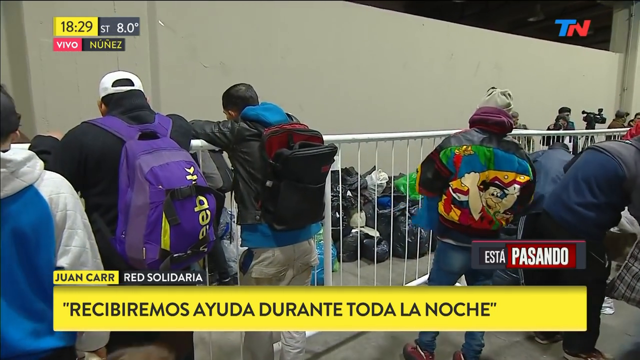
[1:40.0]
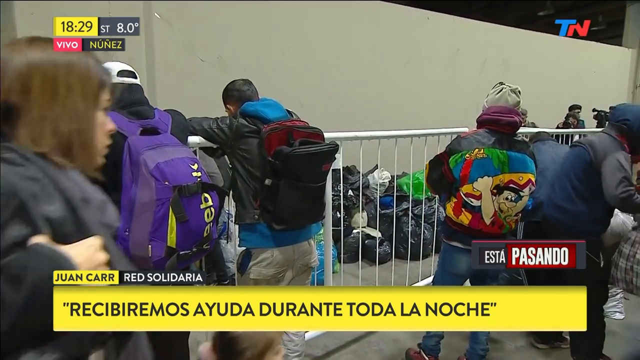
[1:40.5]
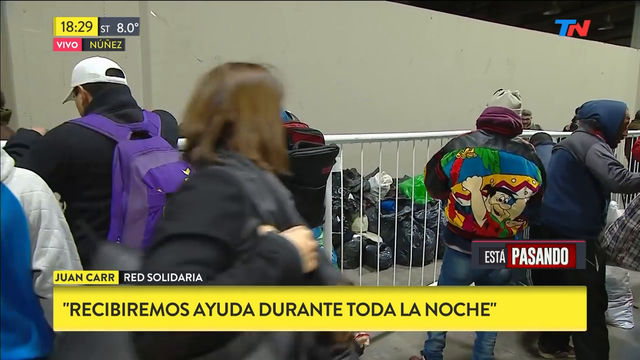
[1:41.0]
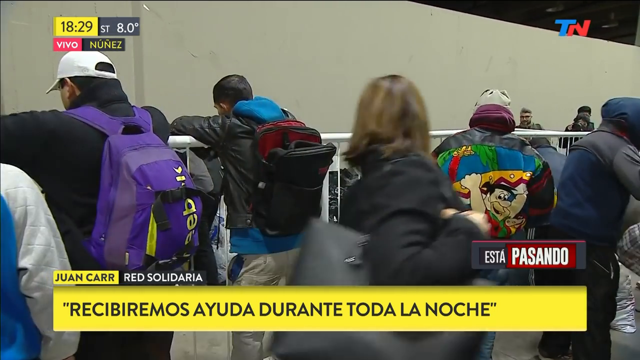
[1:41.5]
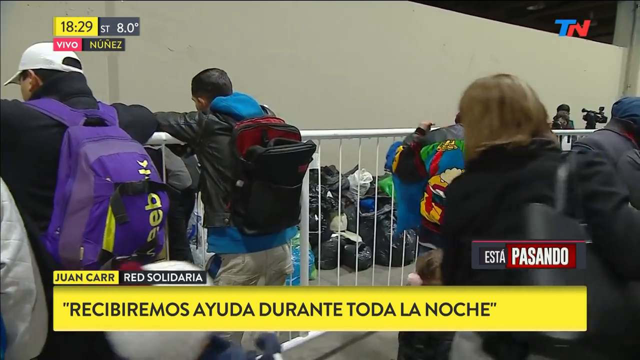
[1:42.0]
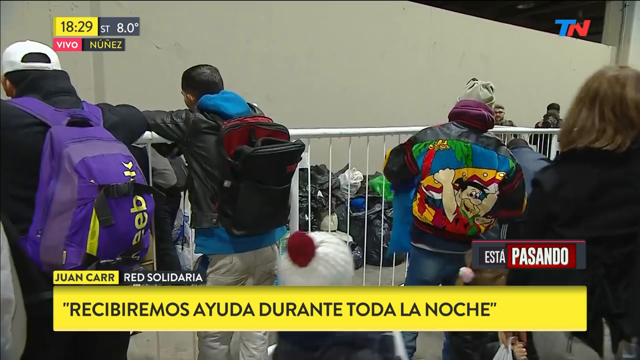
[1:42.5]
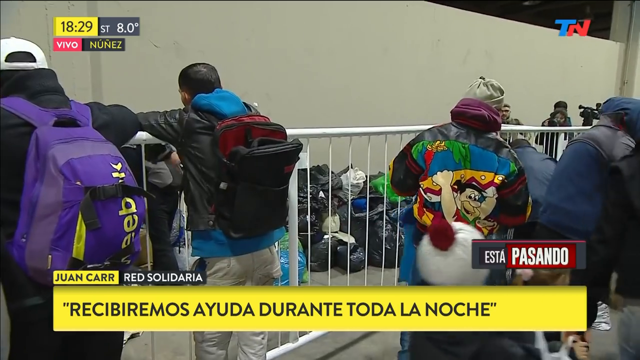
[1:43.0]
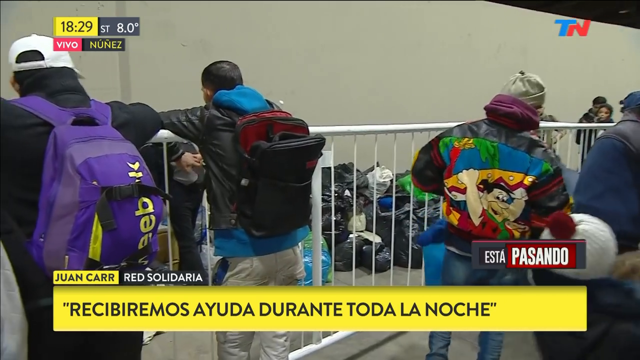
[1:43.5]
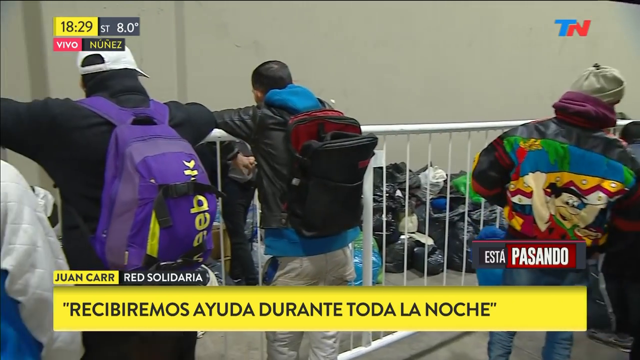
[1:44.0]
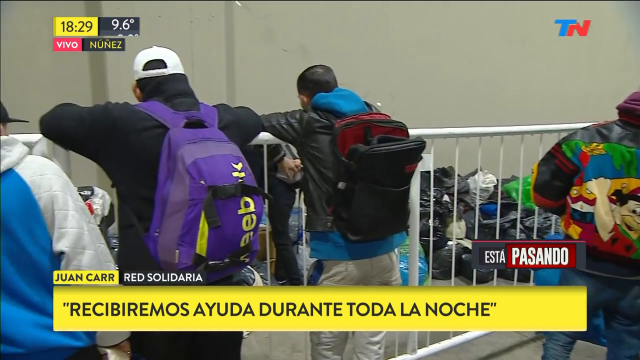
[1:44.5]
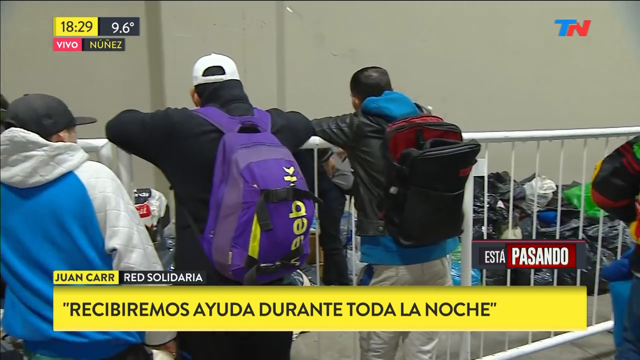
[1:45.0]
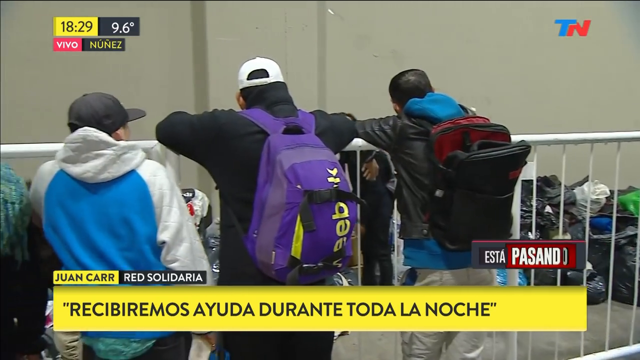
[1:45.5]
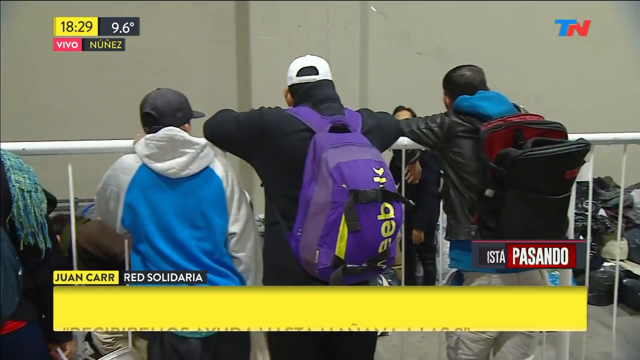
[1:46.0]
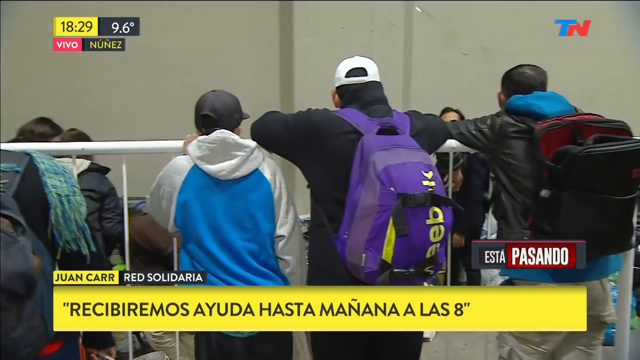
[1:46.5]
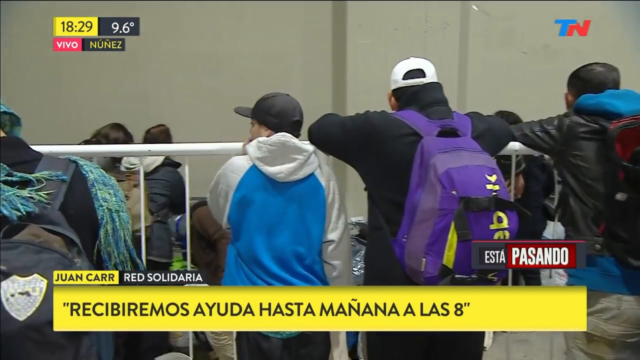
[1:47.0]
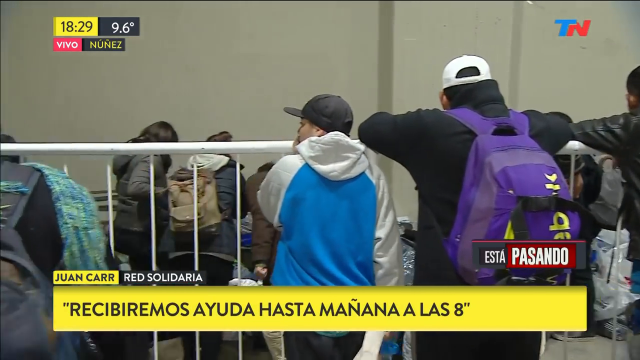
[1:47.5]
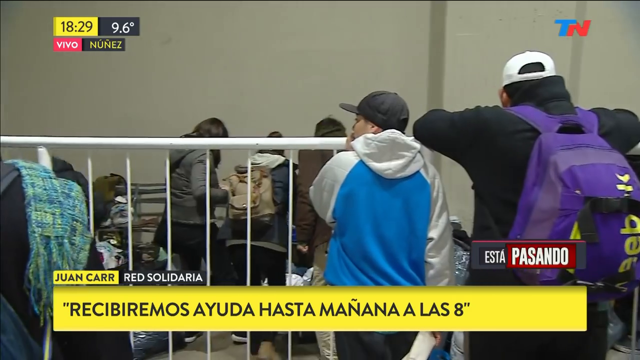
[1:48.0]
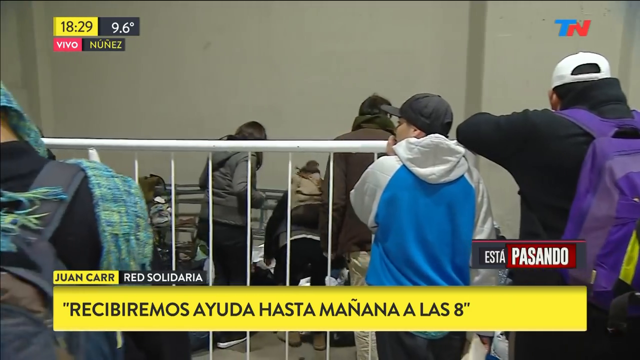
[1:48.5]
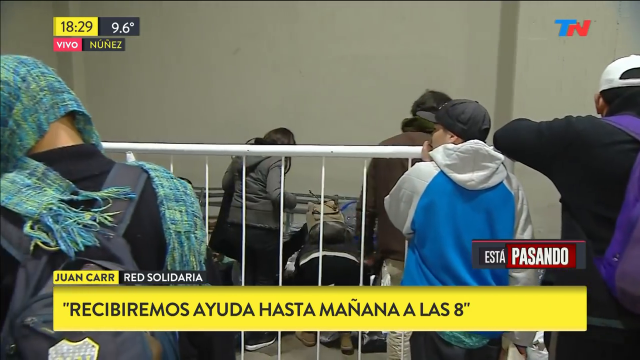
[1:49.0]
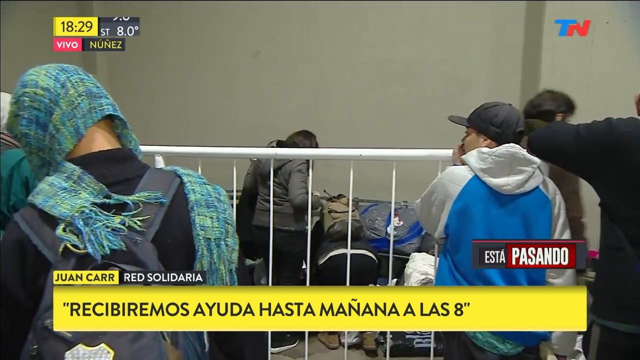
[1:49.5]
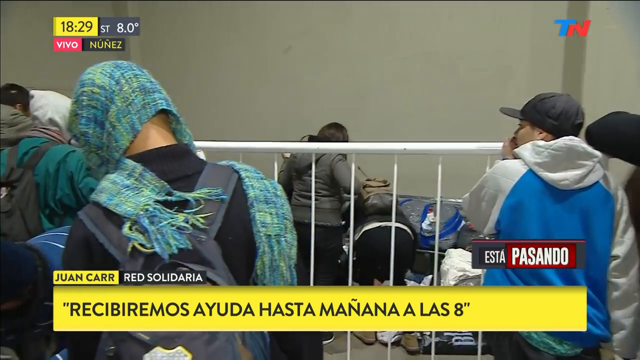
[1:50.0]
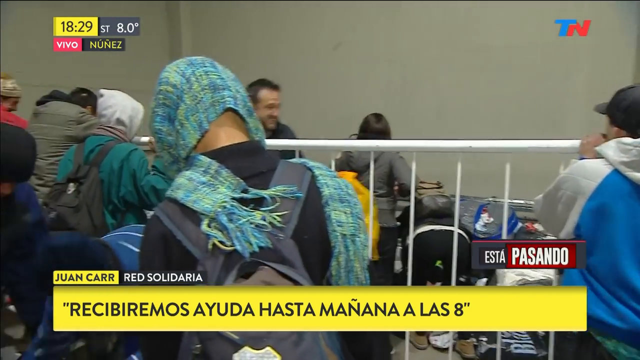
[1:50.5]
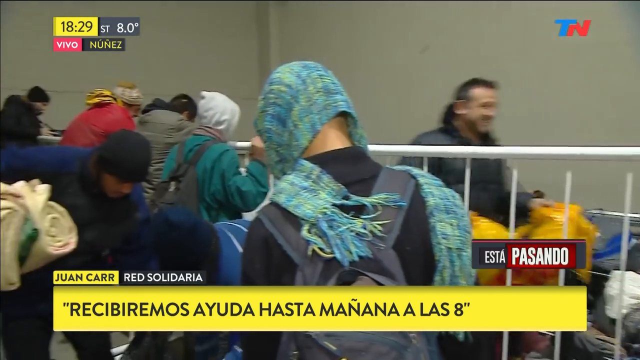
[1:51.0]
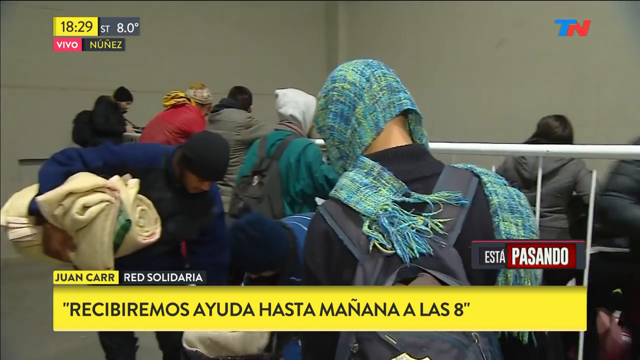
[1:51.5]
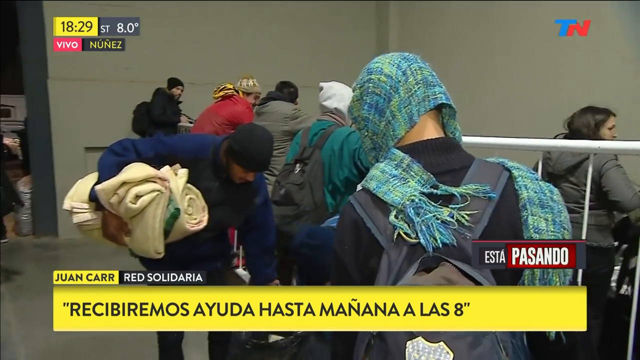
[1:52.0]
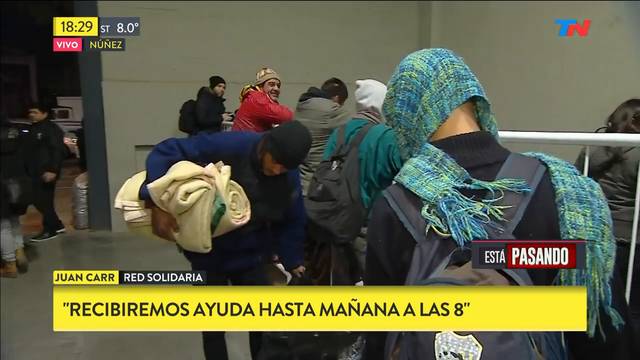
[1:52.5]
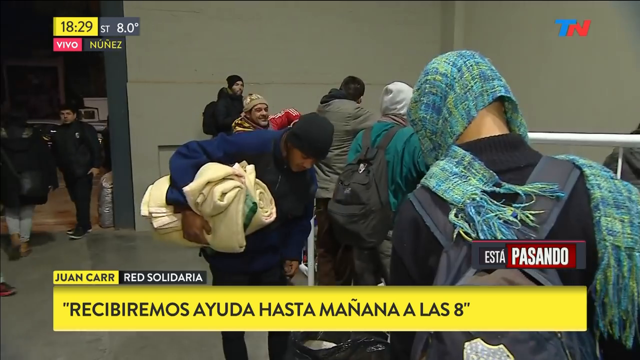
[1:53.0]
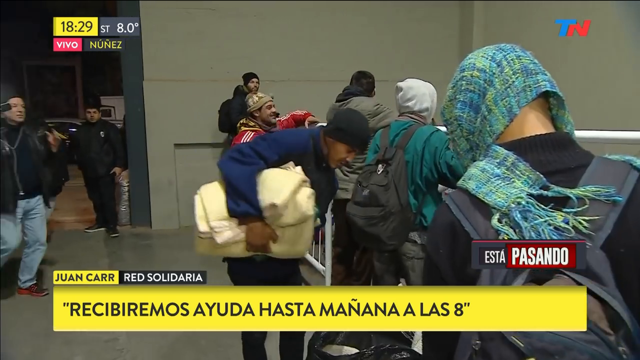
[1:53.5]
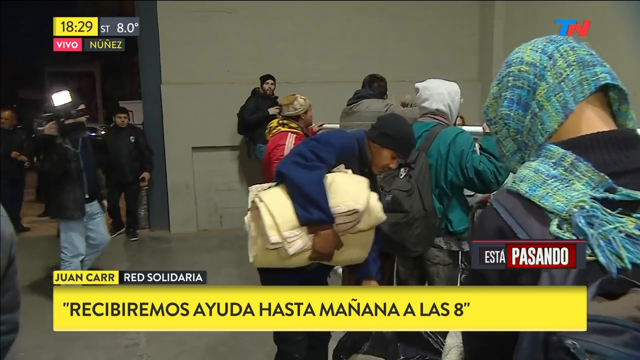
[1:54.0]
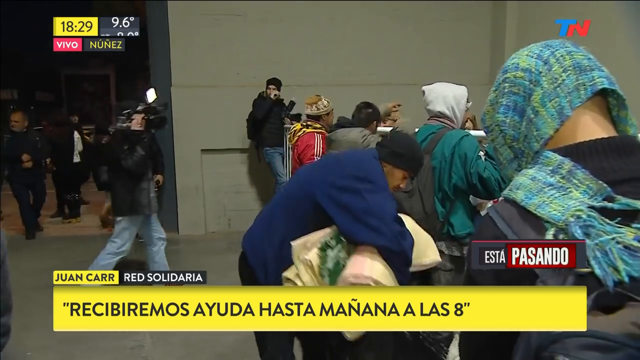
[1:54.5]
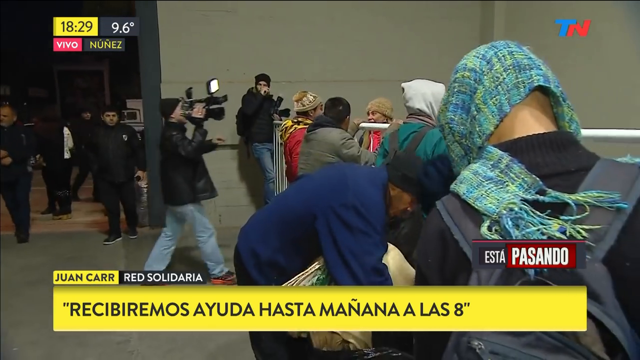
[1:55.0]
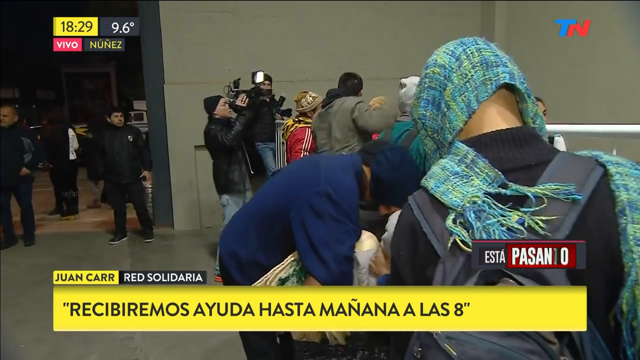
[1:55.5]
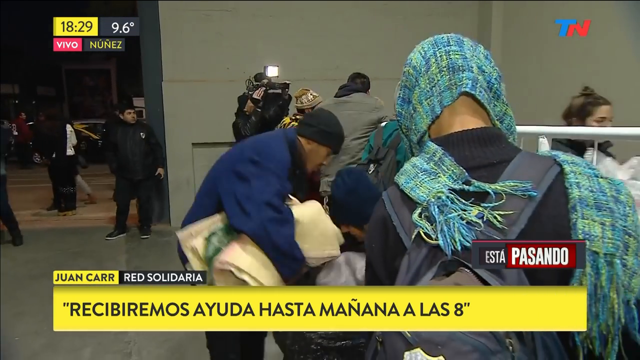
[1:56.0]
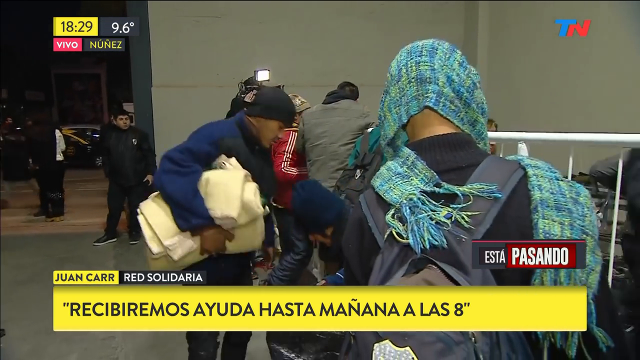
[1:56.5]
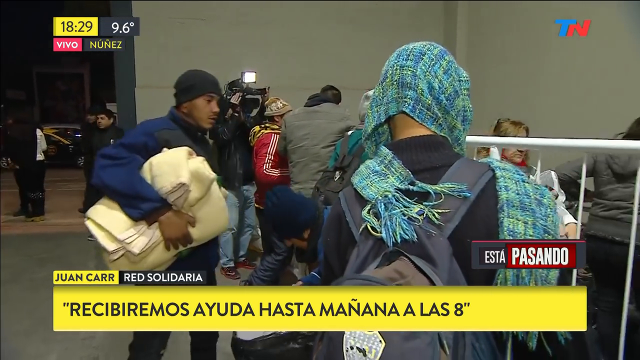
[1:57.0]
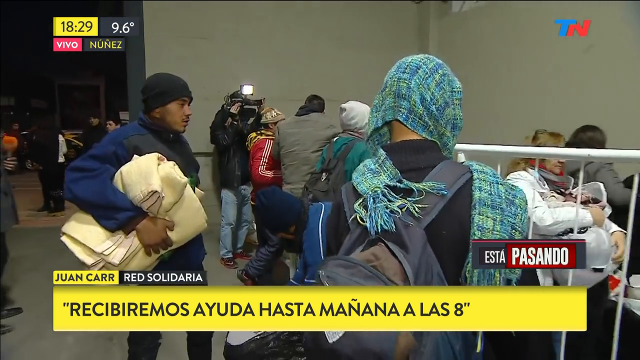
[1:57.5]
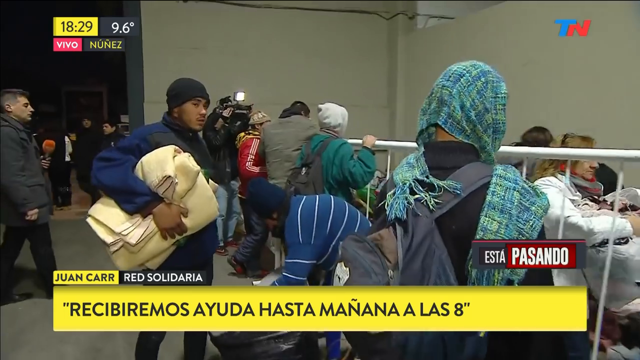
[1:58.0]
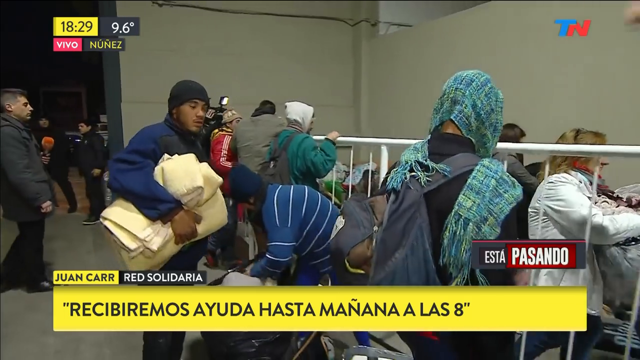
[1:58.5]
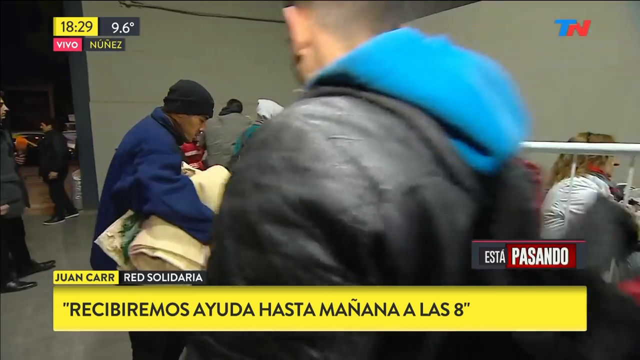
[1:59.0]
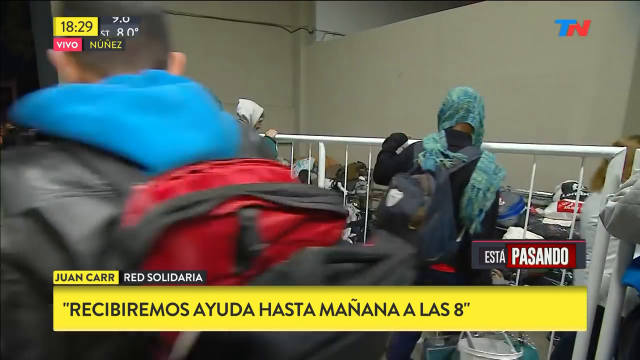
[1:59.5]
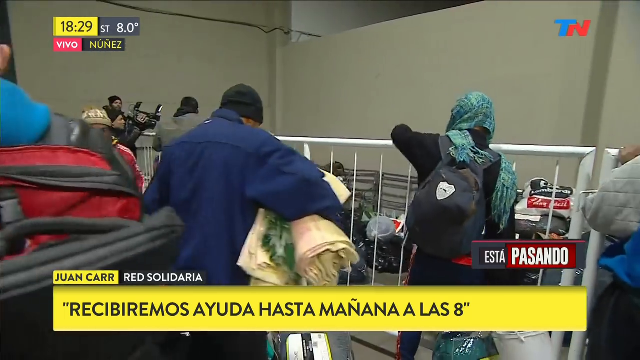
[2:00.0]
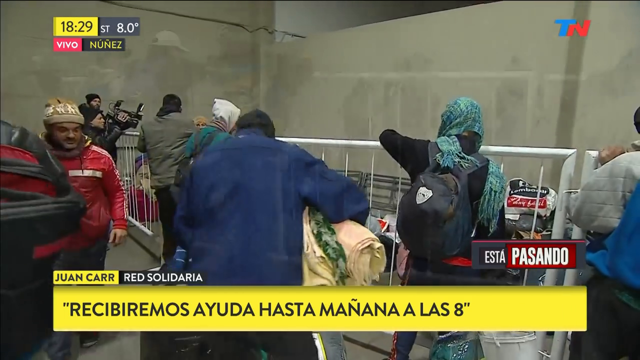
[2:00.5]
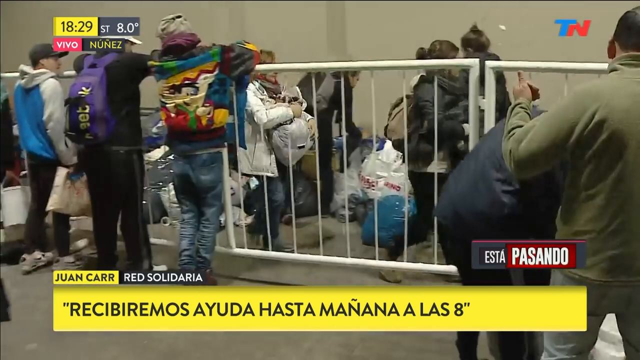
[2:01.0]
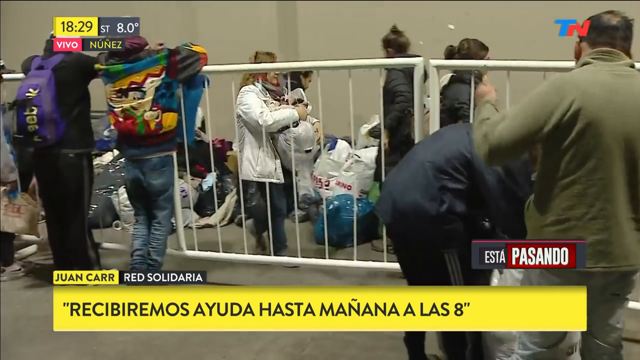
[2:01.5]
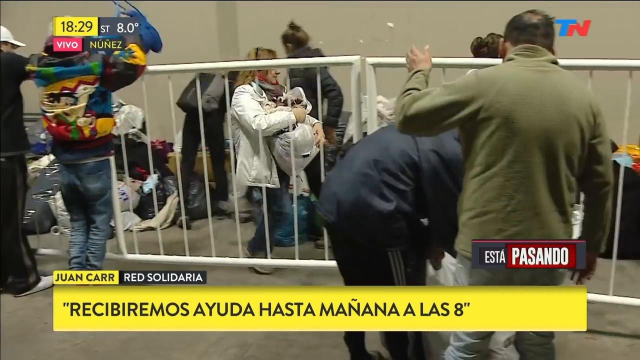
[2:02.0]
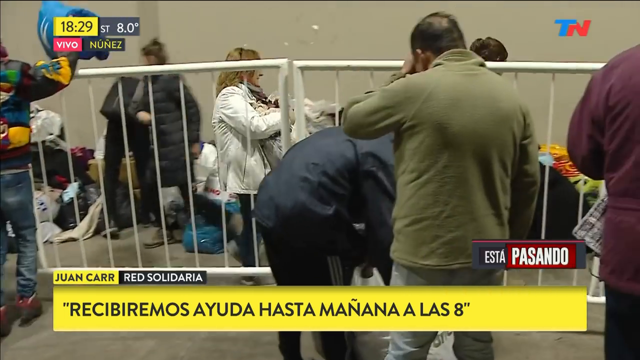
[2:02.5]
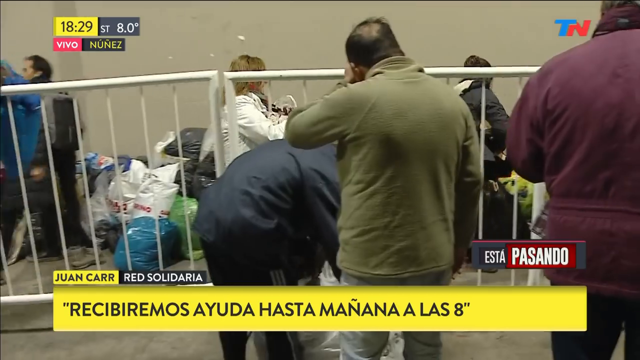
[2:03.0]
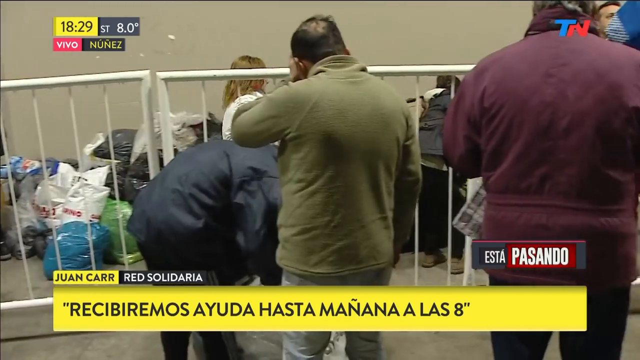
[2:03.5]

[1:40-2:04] Other journalists with cameras are working and taking pictures. There seem to be many blankets over the gates. Juan Carr apparently is not on screen, but his name is still shown while the footage shows the scene around them.